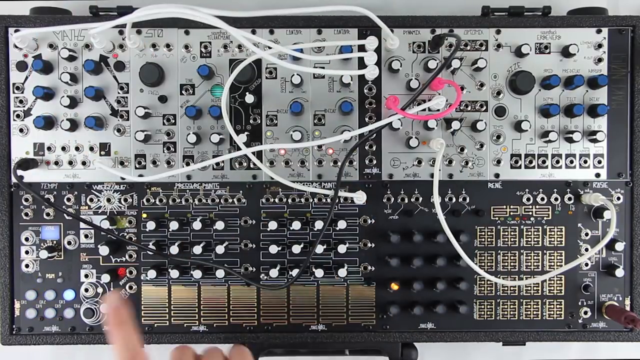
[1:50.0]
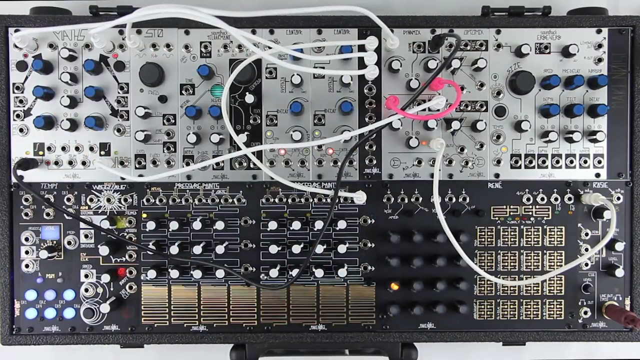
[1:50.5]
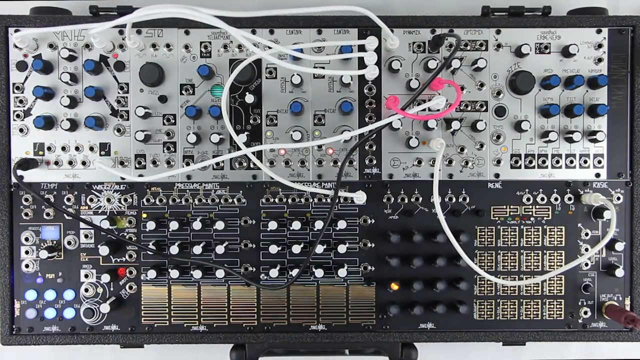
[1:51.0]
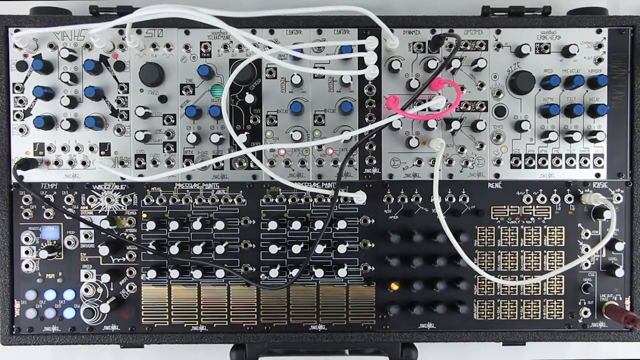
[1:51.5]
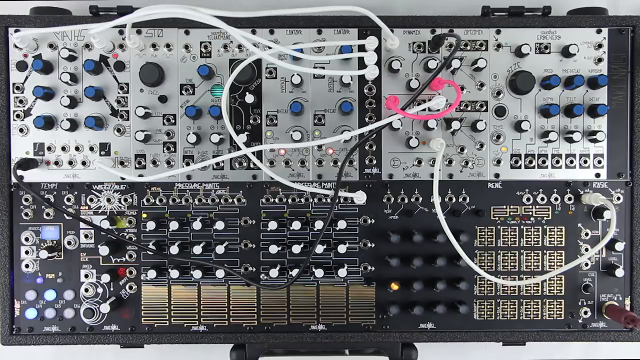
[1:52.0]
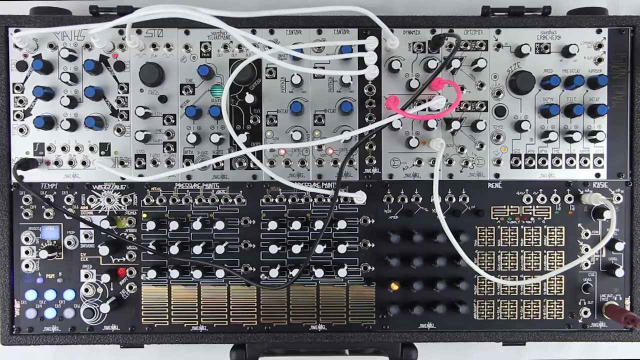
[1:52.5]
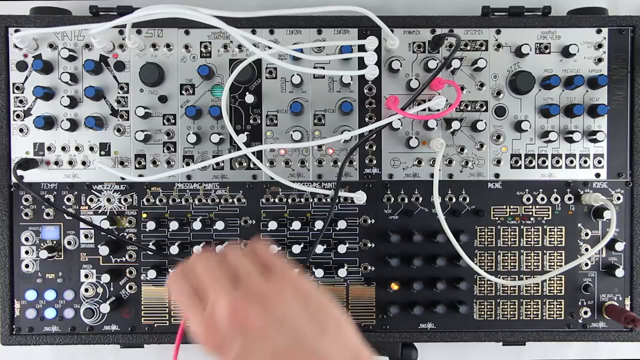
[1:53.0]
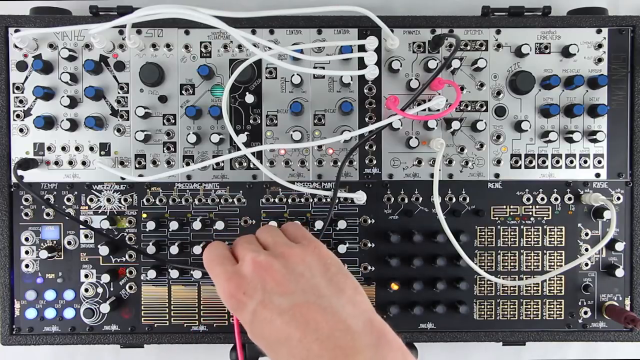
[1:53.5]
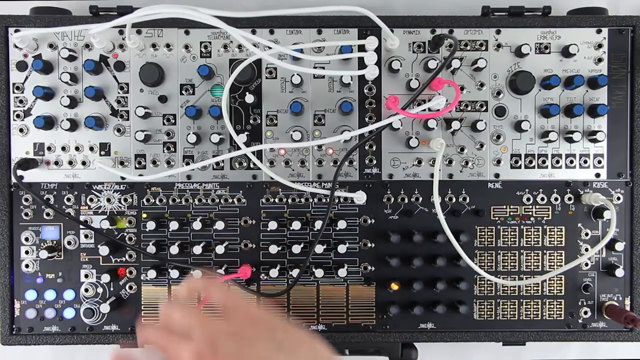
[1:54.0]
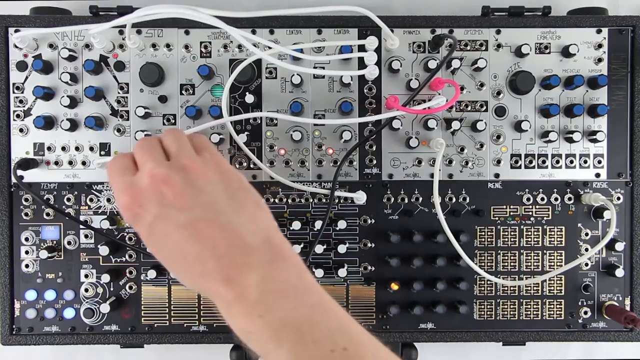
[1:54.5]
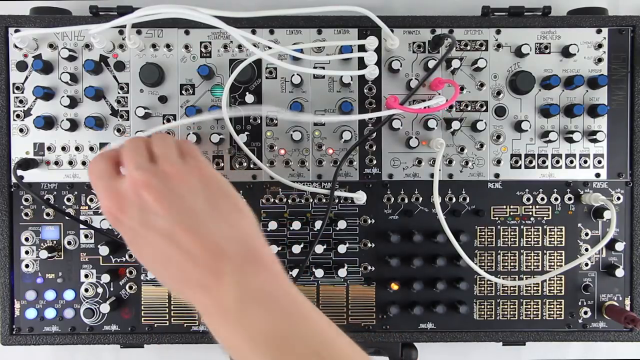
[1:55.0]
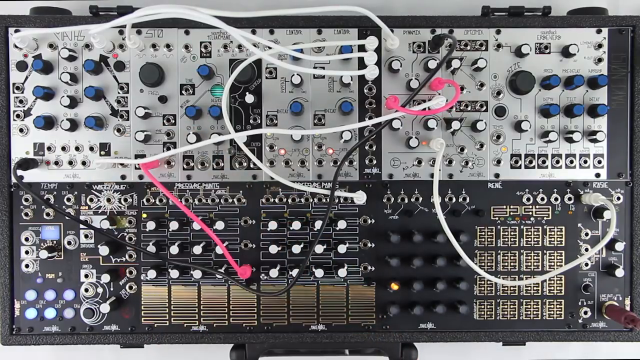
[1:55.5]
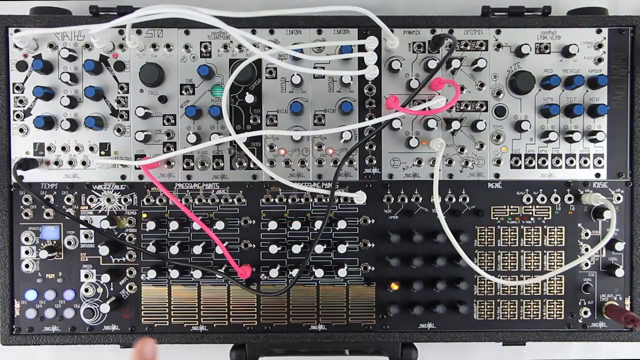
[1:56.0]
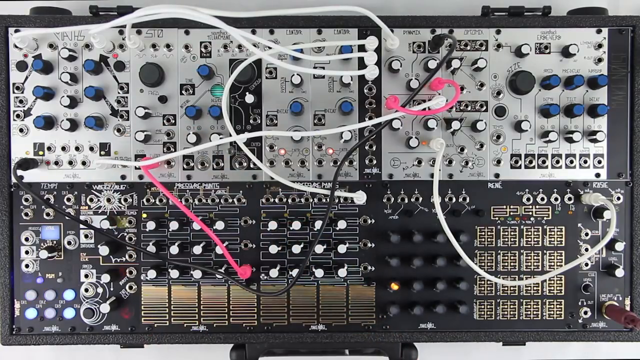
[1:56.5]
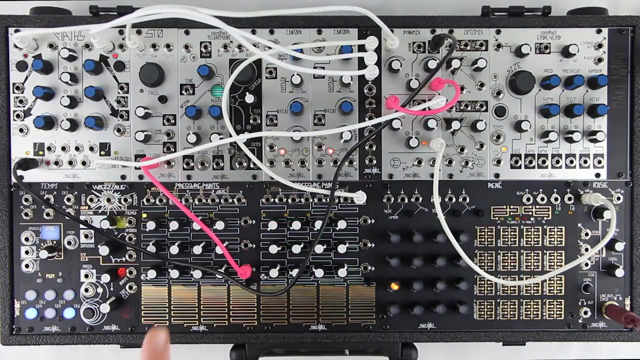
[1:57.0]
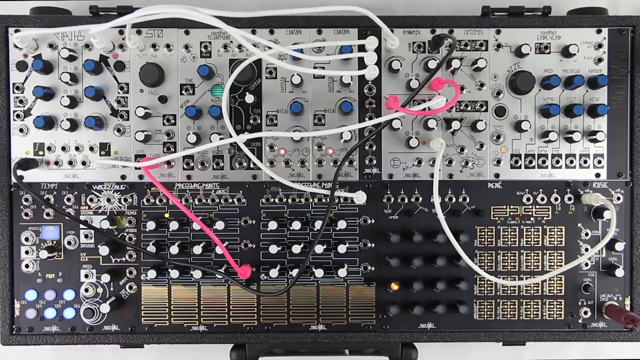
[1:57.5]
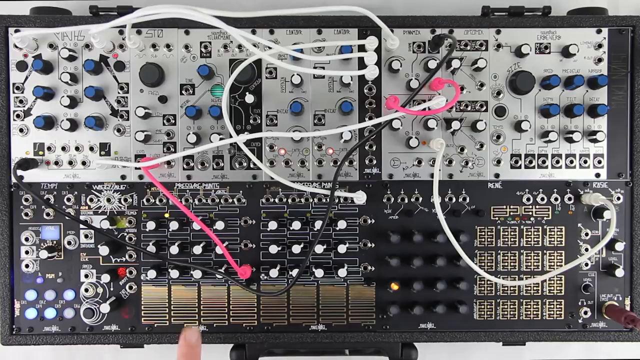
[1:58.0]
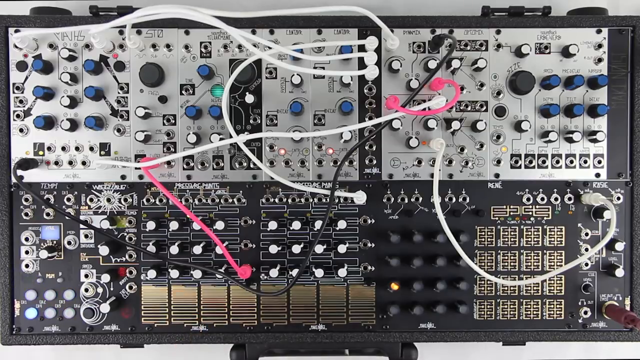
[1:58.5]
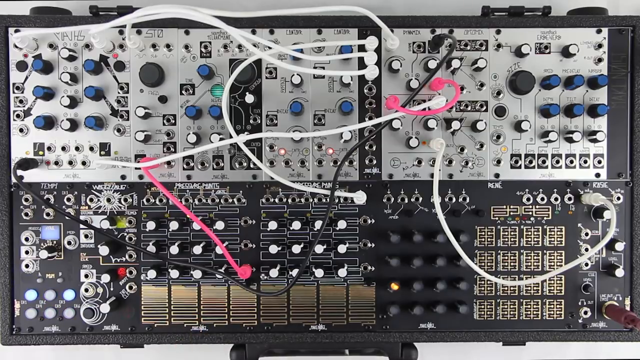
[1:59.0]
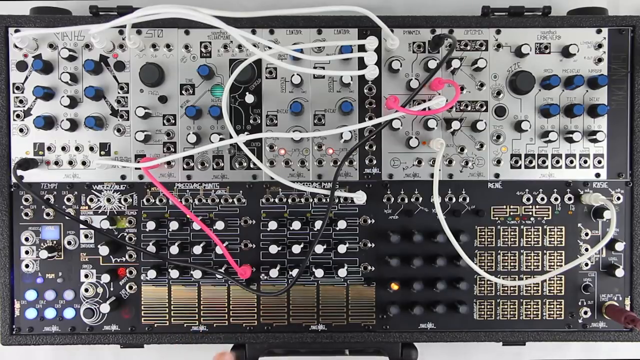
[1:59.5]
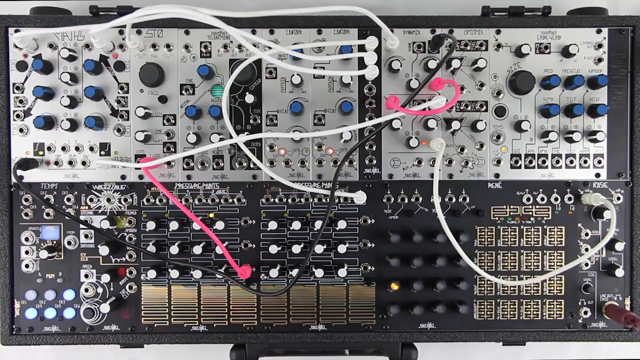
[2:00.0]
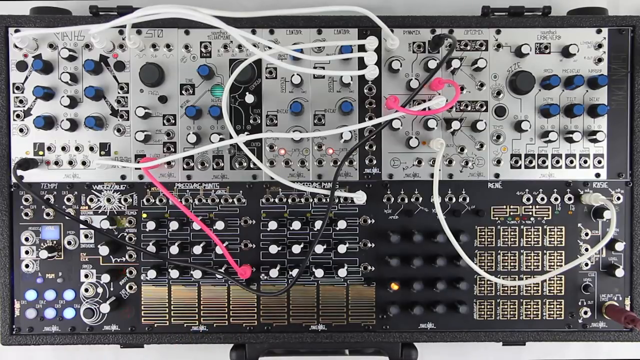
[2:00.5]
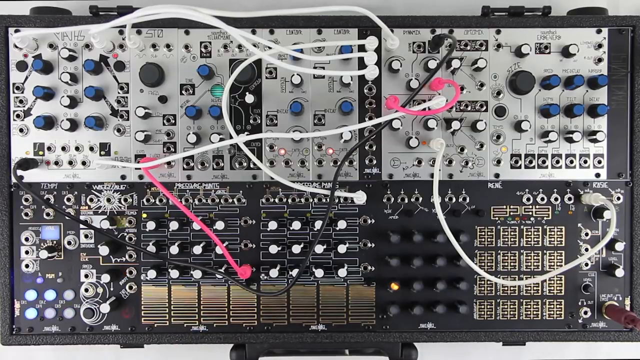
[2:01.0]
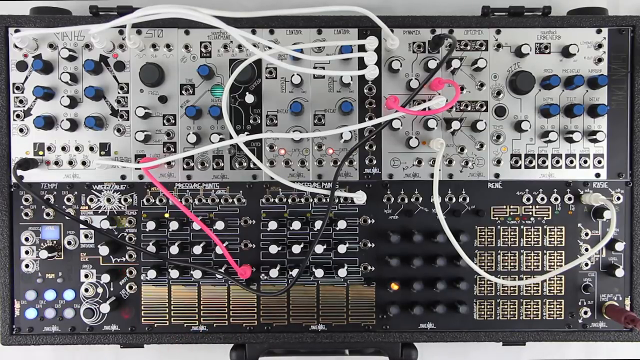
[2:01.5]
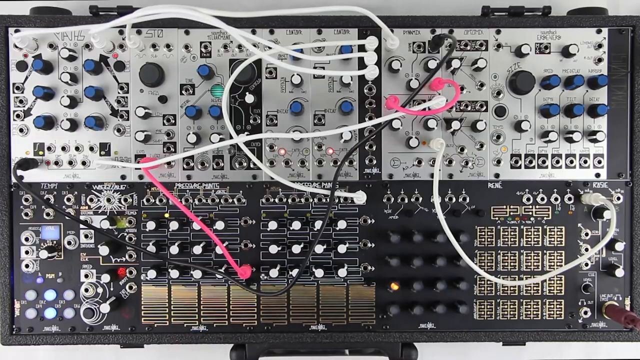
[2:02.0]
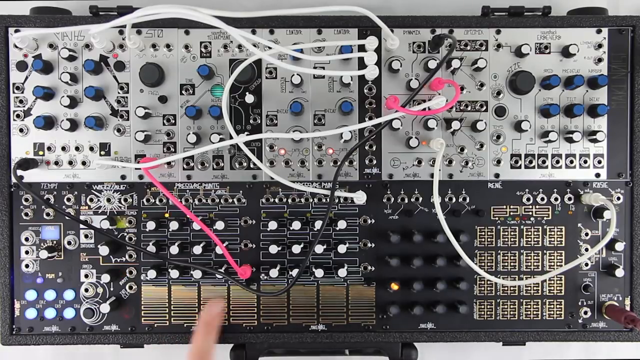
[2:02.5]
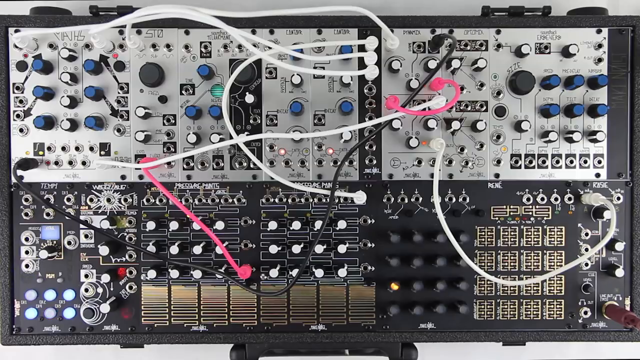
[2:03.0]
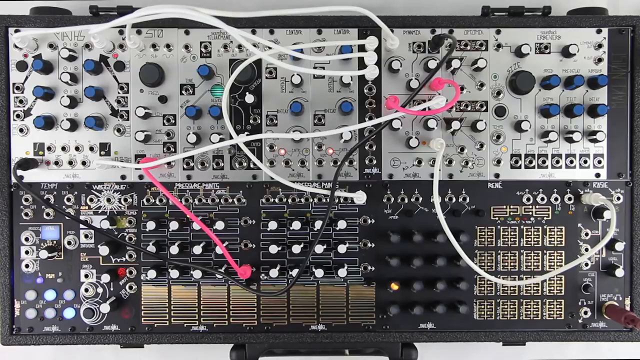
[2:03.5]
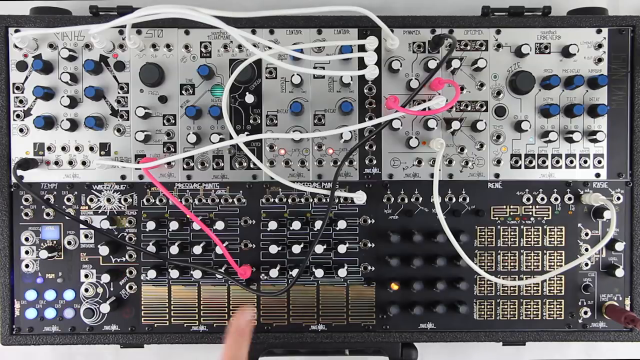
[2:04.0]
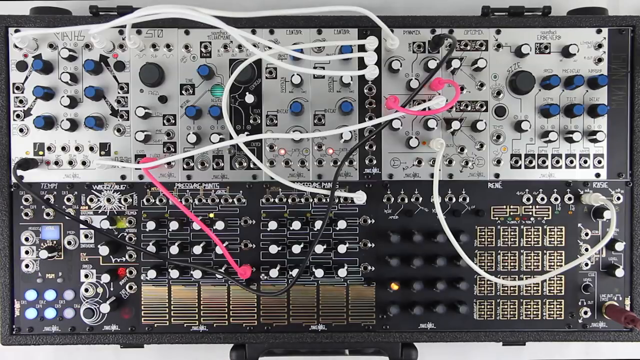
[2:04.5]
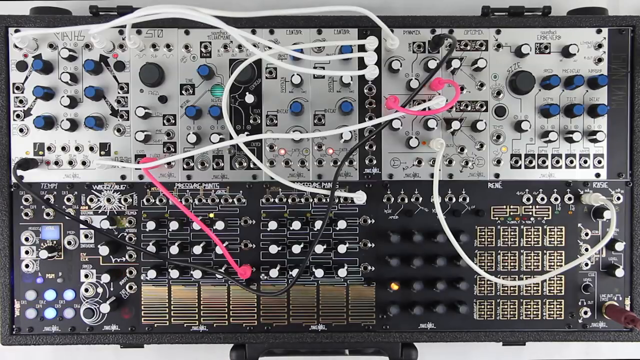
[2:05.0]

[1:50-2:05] On the physical three-dimensional circuit board, five white wires have been connected, each with two connections inserted into little holes on the back of the board. The ends of the wires appear to have little connectors that go inside the holes. One black wire and one pink or red wire, each with two connections on the back, are also connected to empty holes, matching the pathway in the graphic diagram, which has a white background with black writing and black lines connecting circles, squares and triangles.